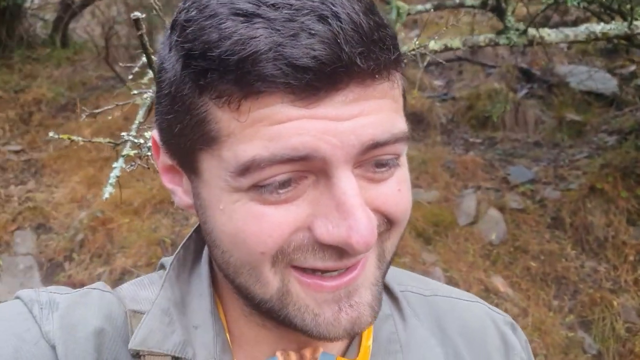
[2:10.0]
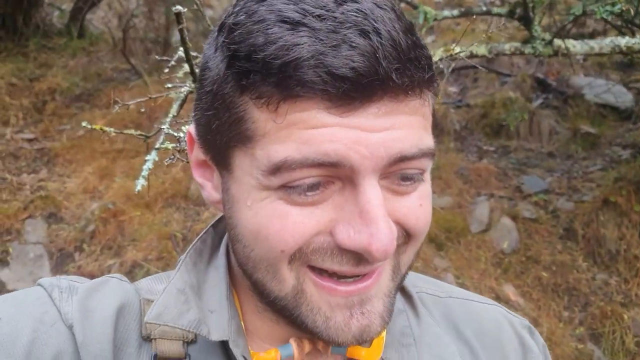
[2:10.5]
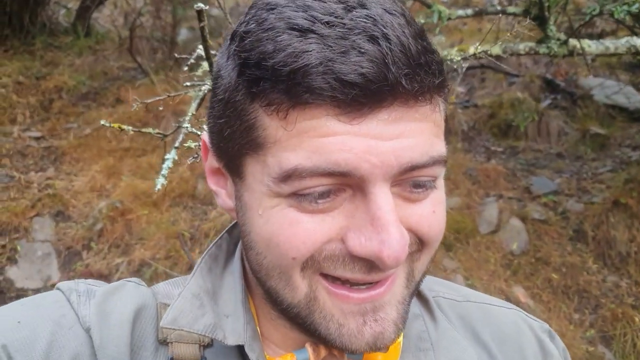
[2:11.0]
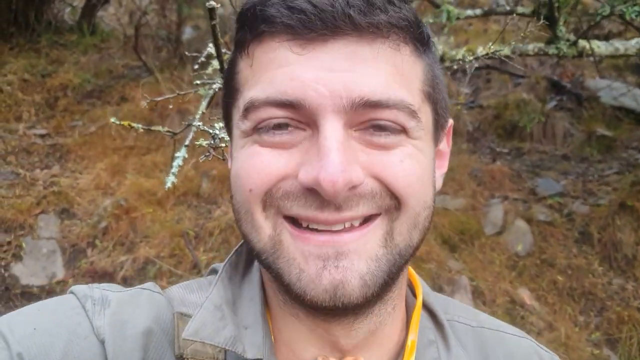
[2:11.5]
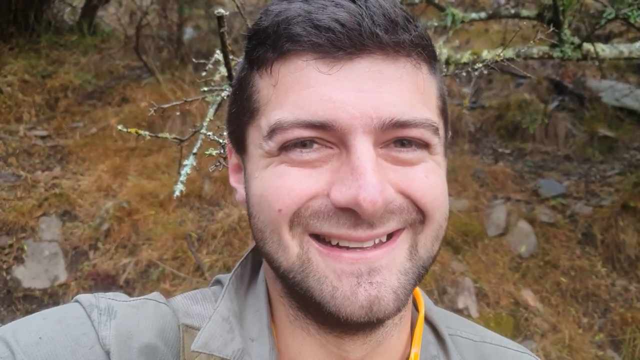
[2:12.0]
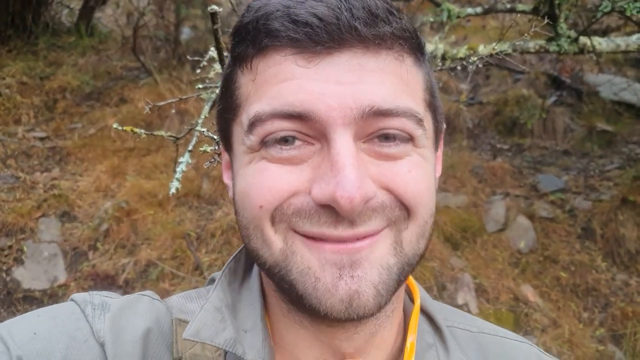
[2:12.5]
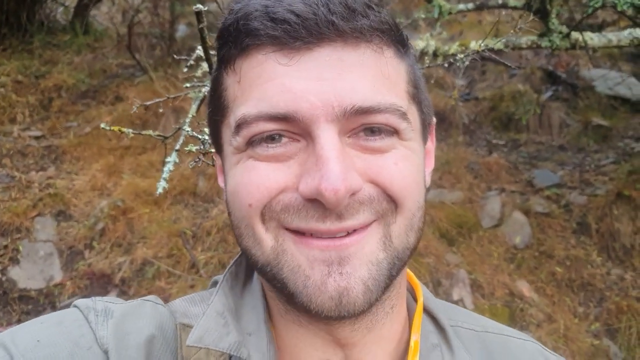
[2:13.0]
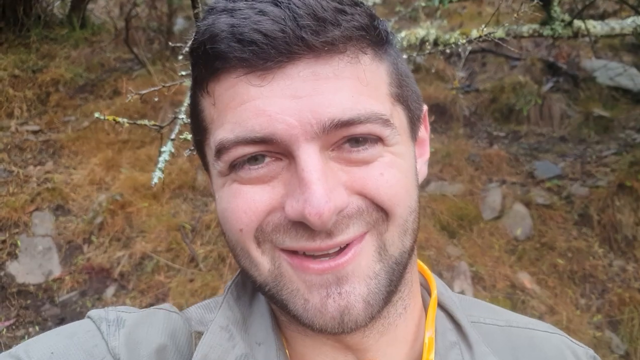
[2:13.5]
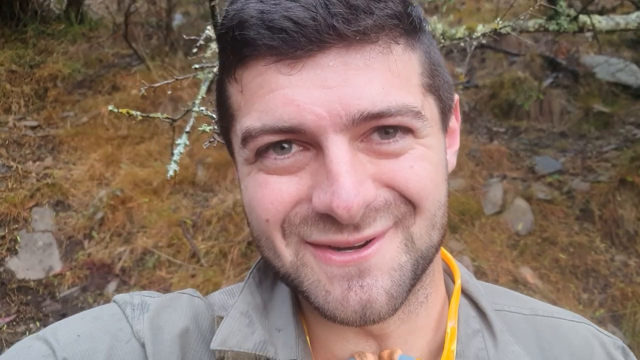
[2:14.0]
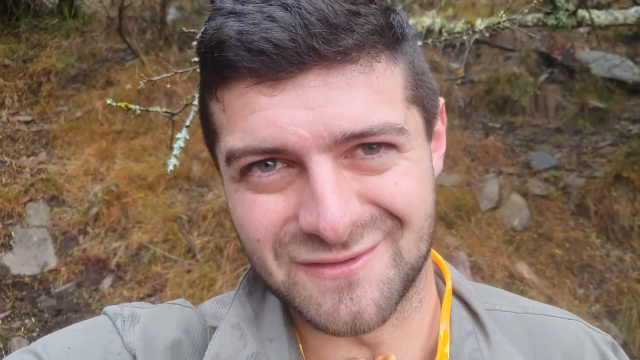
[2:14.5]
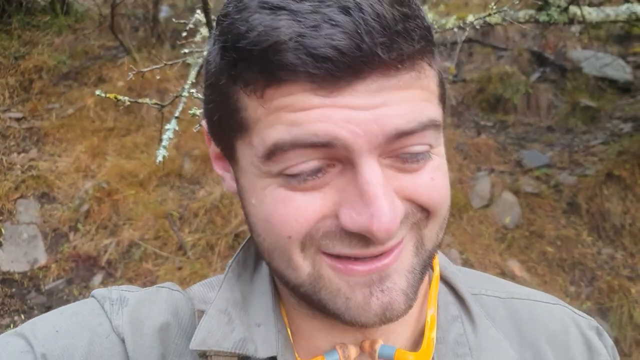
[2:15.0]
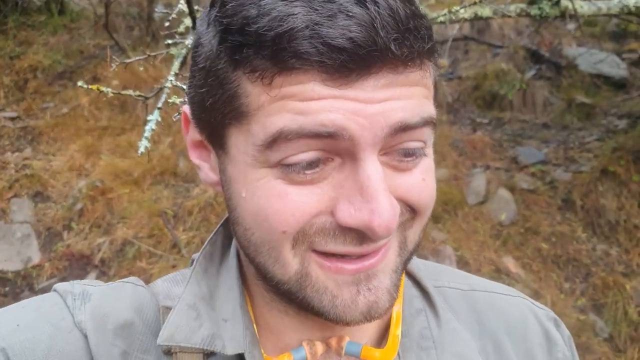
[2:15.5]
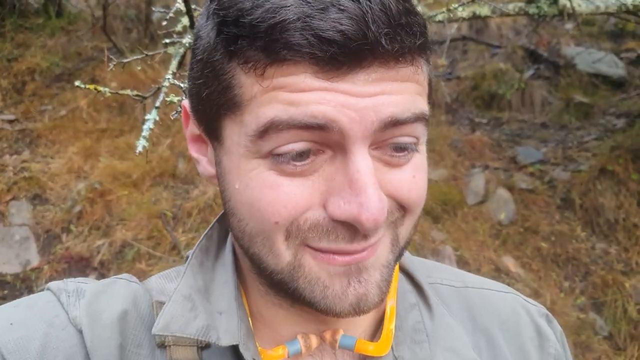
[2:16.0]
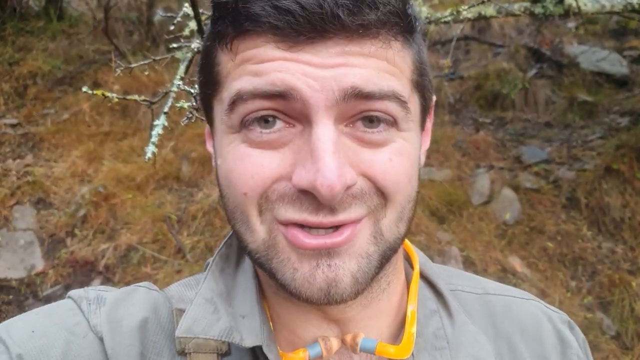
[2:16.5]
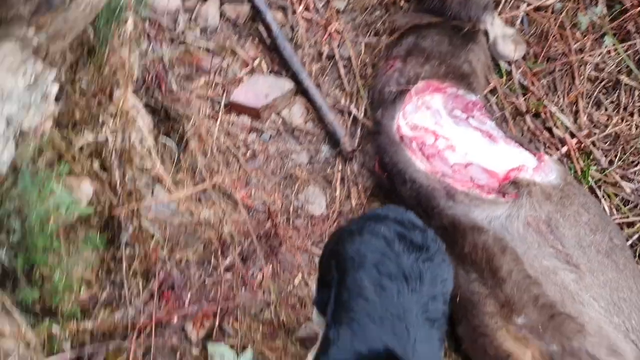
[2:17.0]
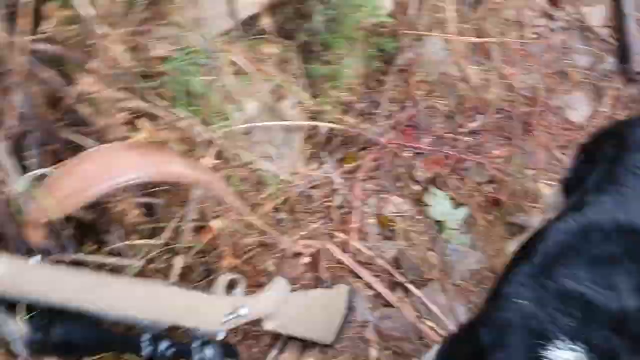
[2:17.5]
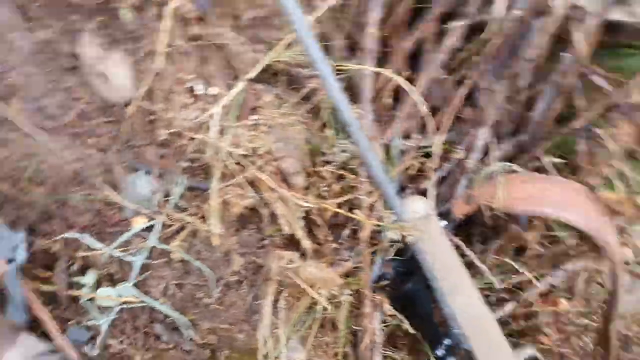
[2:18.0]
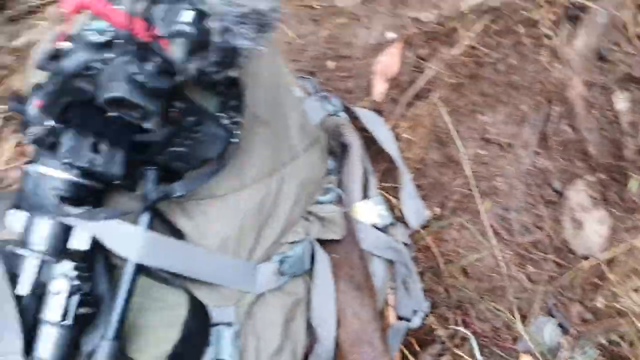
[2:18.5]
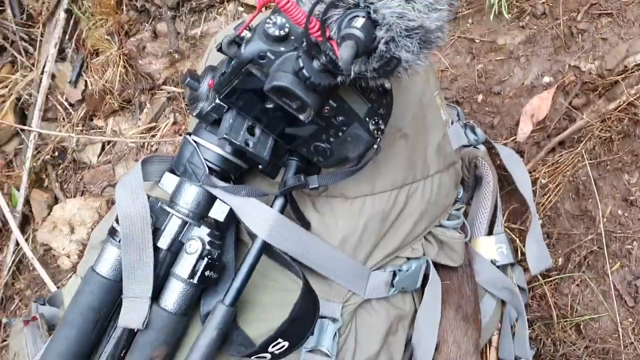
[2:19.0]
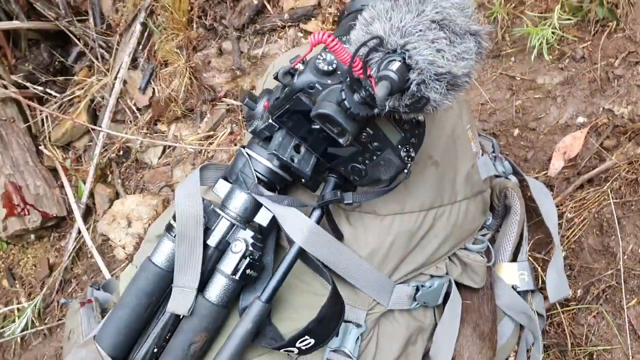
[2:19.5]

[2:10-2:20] The man keeps talking to the camera. He wears a pale green shirt and has short dark brown hair, and he is stood in front of a backdrop of trees and small rocks. Around his neck is a plastic set of what are perhaps ear defenders. He starts smiling while looking down to the right of the camera, then looks back to the camera and smiles effusively as he talks; his brow is no longer furrowed and he looks more relaxed. He then furrows his brow as he looks down, then looks back up. He points his camera down to the floor, showing the back half of his black and white dog from above, and next to the dog, on the right of the screen, what looks like the body of a deer with a large piece of skin removed from the neck section. The camera then pauses on his camera, tripod and bag with kit.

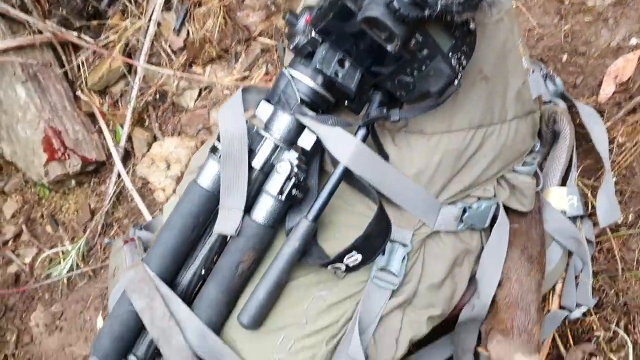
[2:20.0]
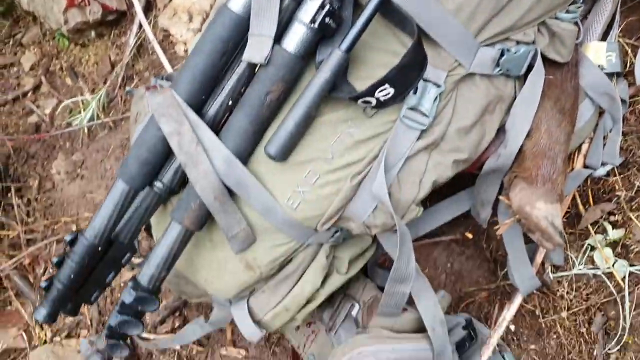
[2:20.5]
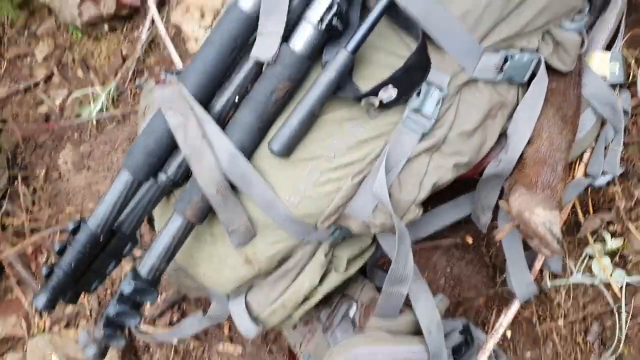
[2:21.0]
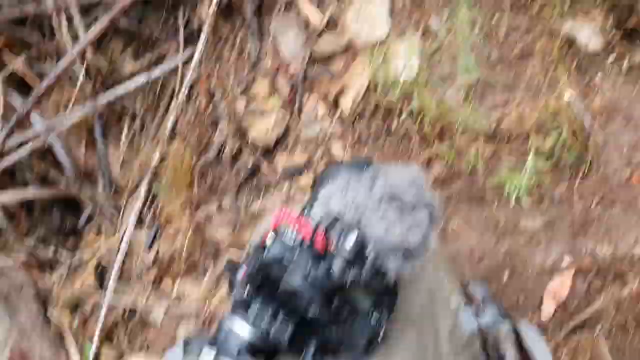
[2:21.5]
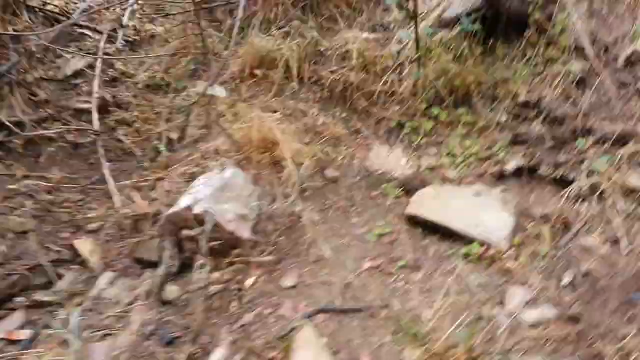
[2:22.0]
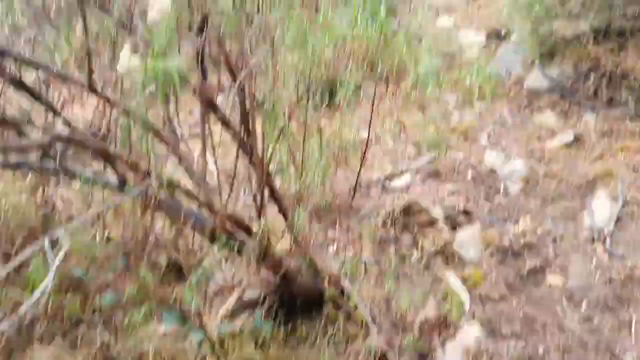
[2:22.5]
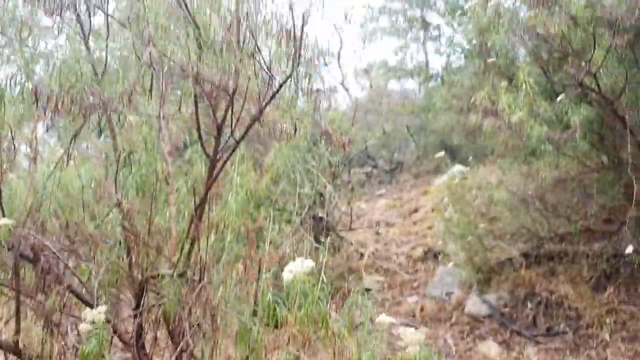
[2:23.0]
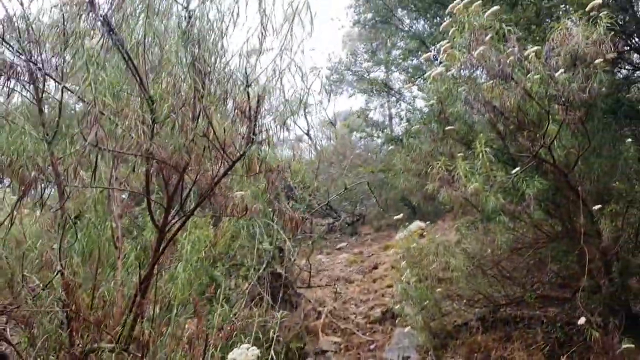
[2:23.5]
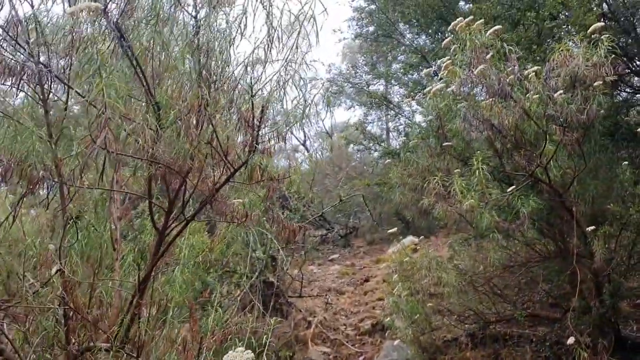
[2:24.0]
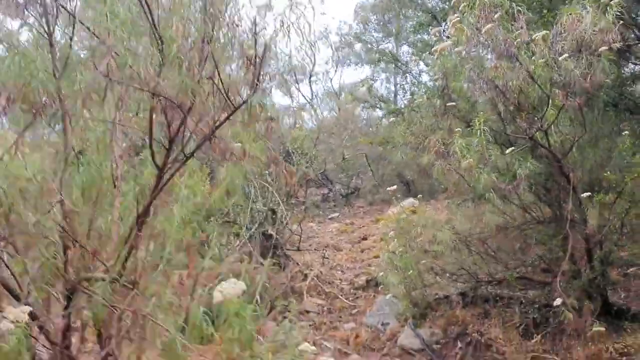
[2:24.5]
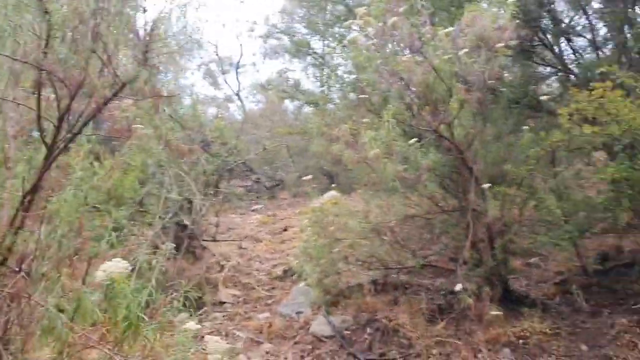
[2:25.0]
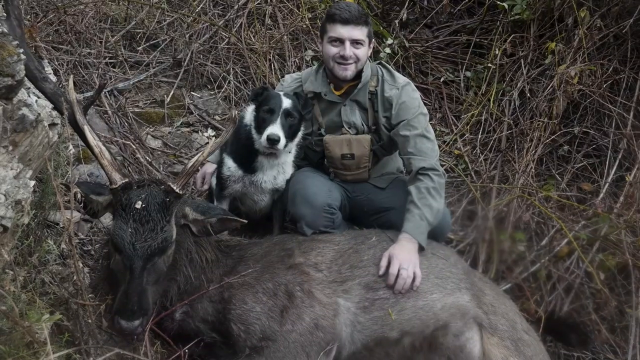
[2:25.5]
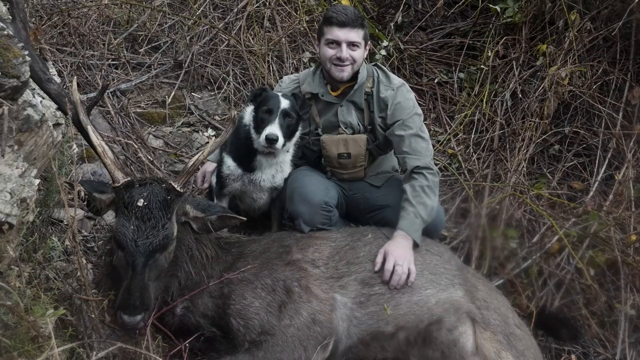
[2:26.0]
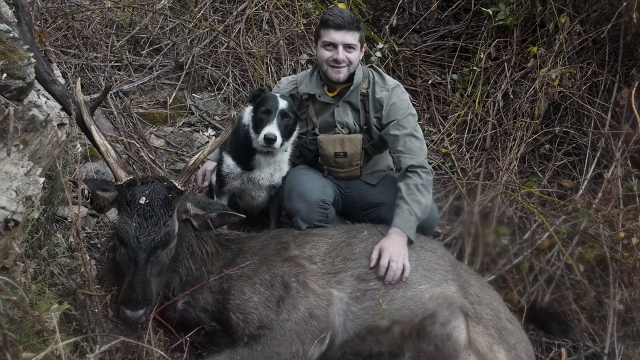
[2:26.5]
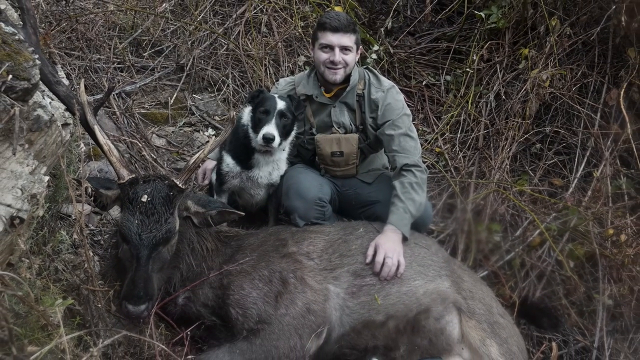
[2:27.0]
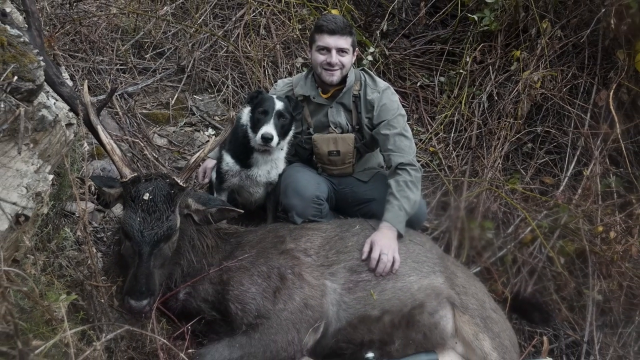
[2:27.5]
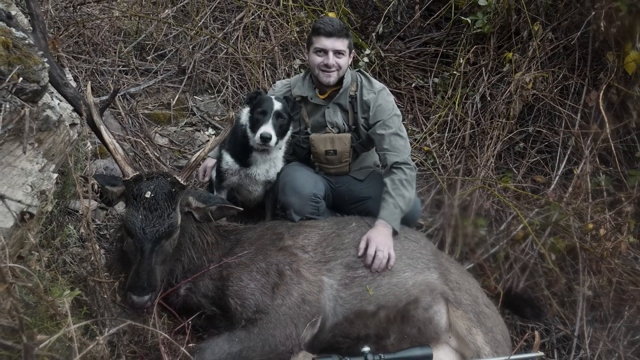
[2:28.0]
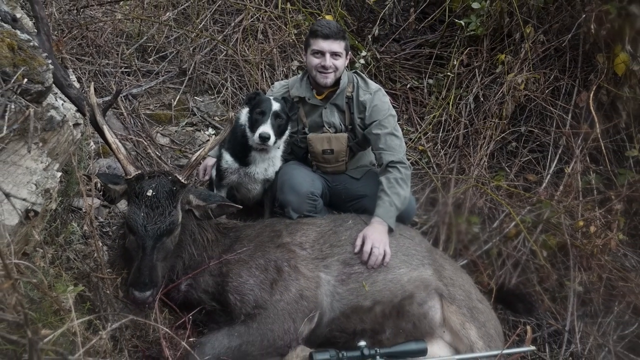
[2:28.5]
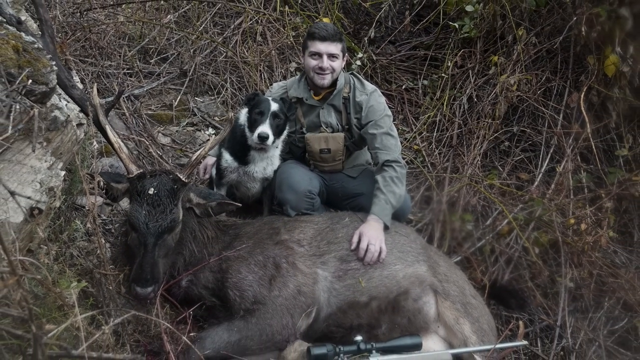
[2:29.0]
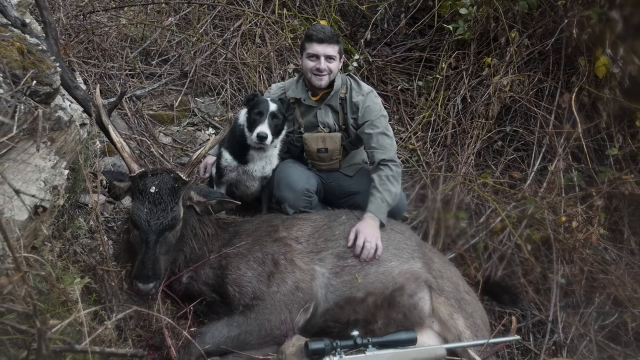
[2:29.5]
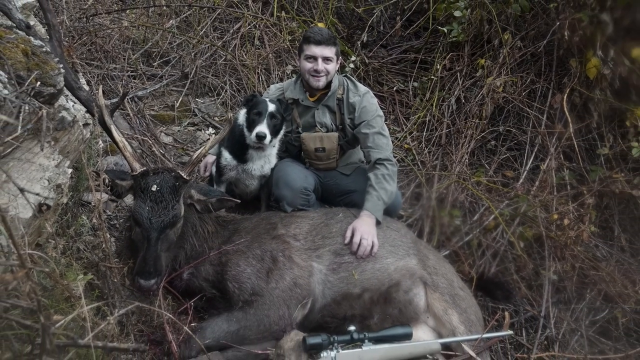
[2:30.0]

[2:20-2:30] The shot shows the man's bag, with his camera at the side of the screen. A rock has some blood on its top corner. The camera pans down to the bottom of the bag and then up, showing rocks on the surface of the ground, and the man then points the camera towards a slight hill path with trees on either side. Next, a picture shows the man next to his dog, smiling, with the body of a large deer with antlers in front of him and his hand on the deer's side. The deer's eyes cannot be seen, and the deer is presumably not alive. The camera then pans out, giving a quick glimpse of a rifle with a telescope on top near the stag's legs at the bottom of the screen. The man looks like he is a hunter.